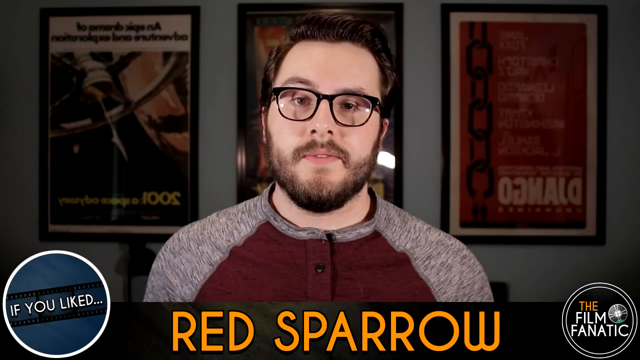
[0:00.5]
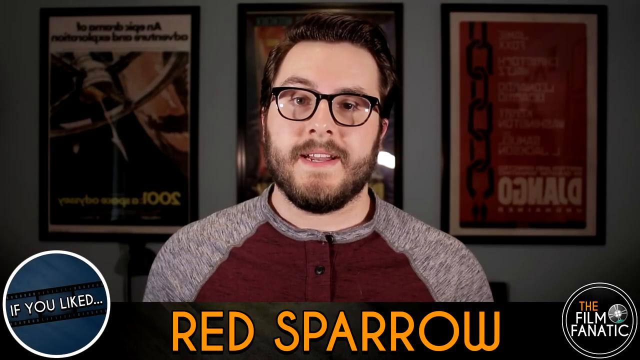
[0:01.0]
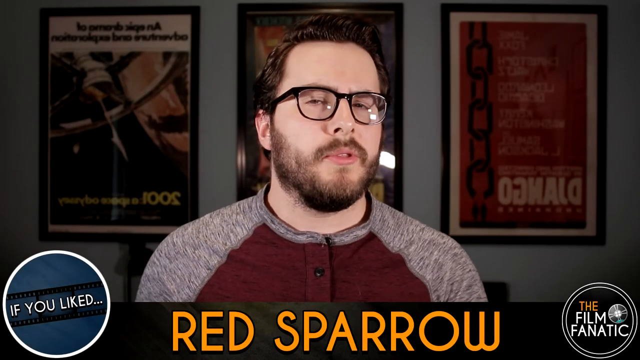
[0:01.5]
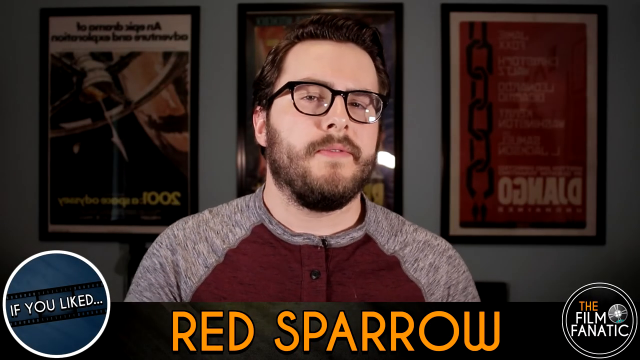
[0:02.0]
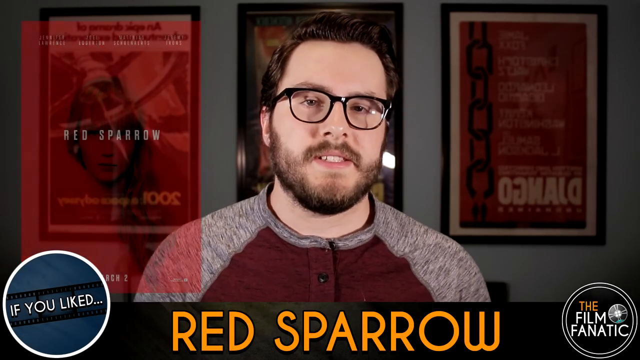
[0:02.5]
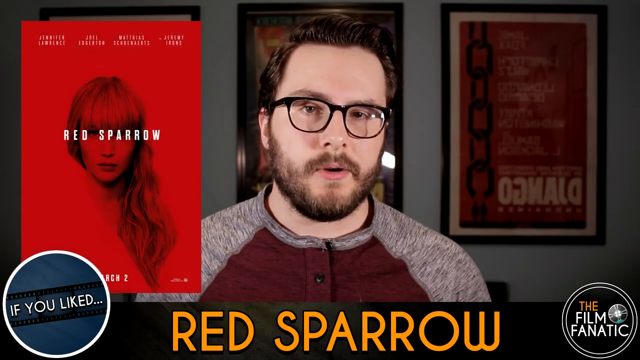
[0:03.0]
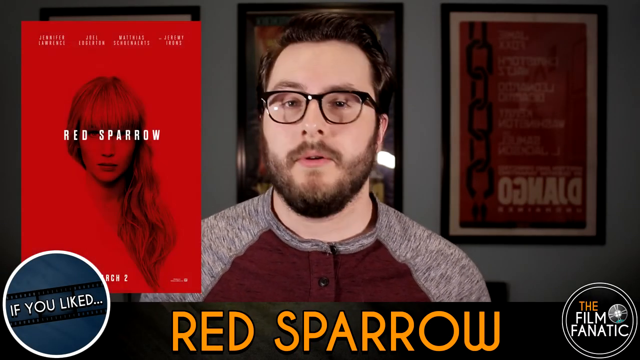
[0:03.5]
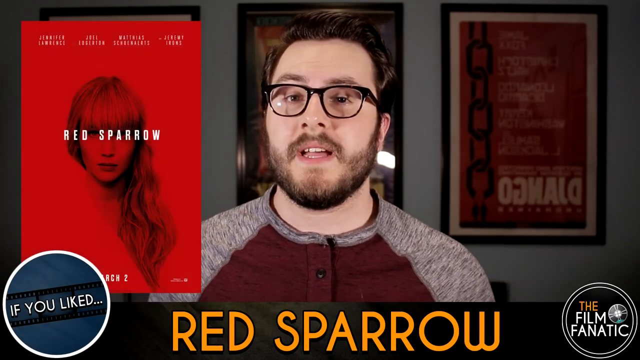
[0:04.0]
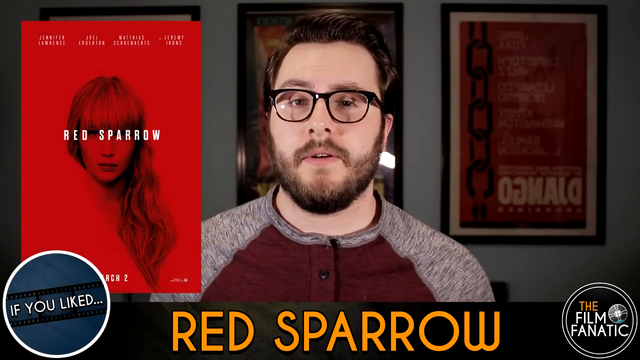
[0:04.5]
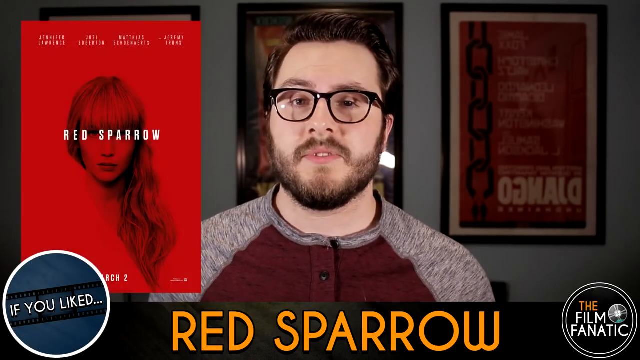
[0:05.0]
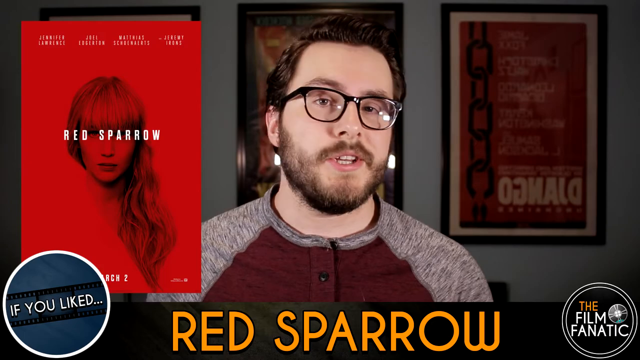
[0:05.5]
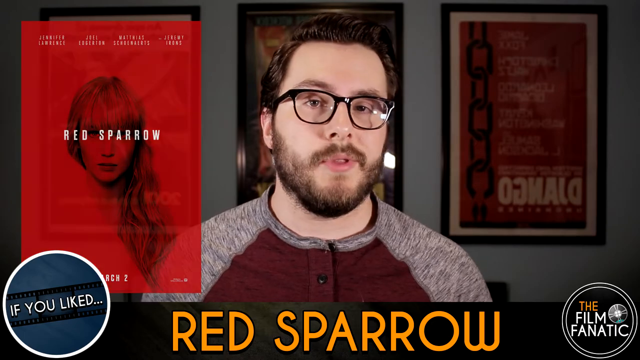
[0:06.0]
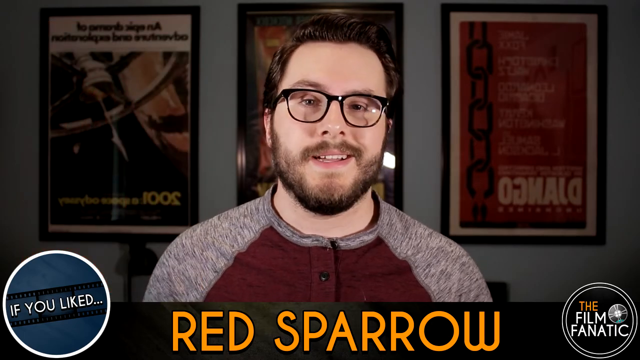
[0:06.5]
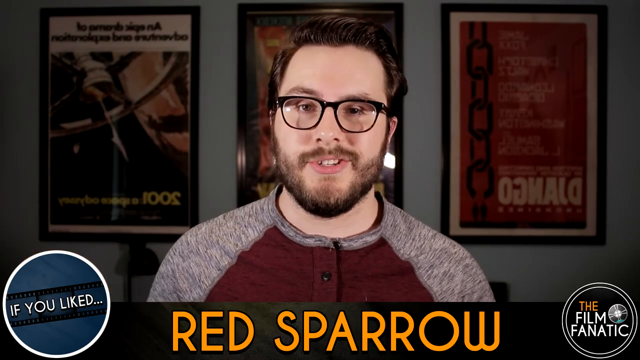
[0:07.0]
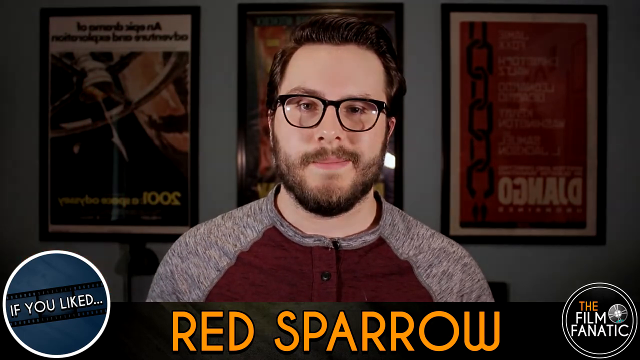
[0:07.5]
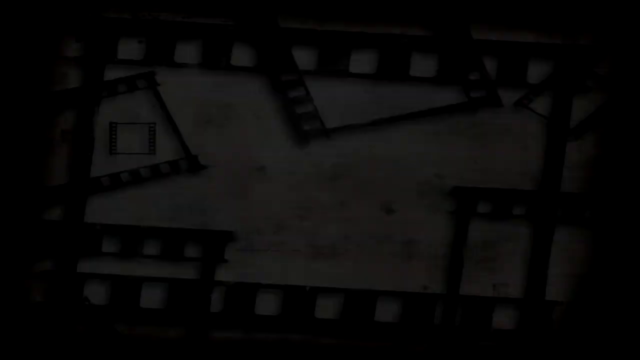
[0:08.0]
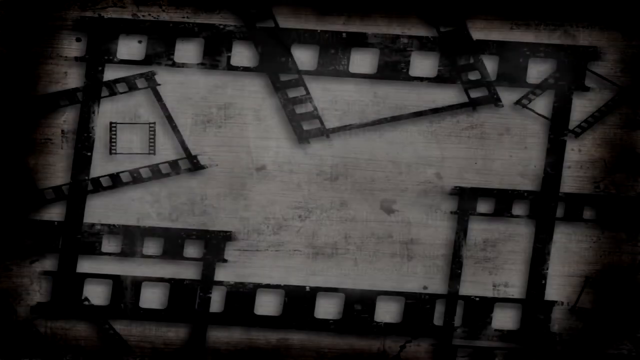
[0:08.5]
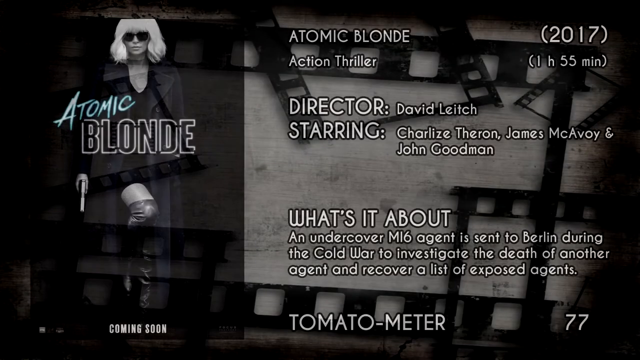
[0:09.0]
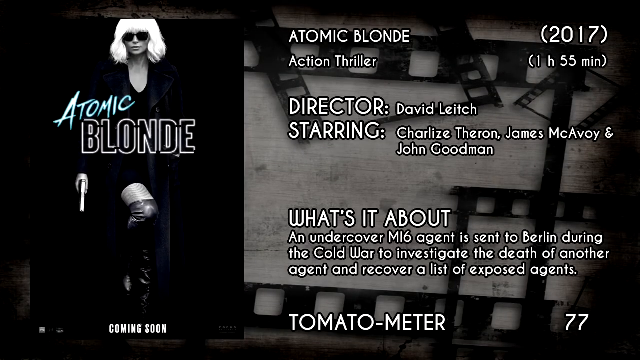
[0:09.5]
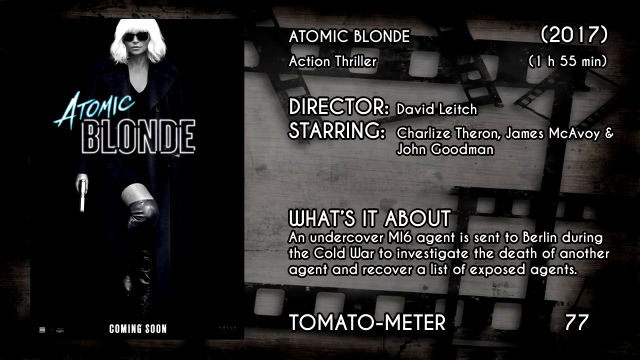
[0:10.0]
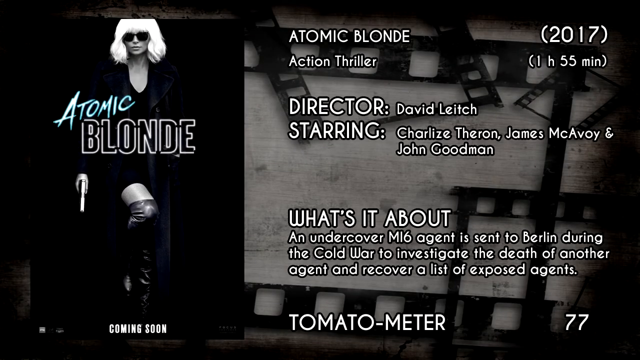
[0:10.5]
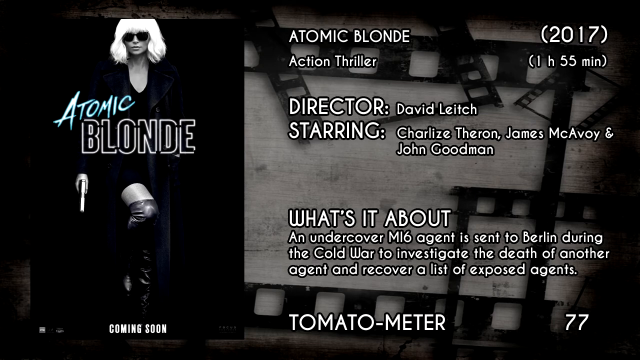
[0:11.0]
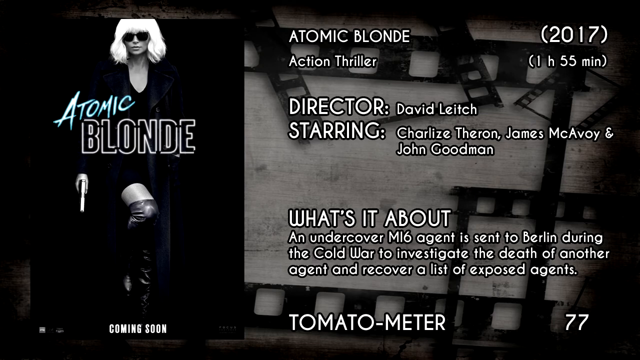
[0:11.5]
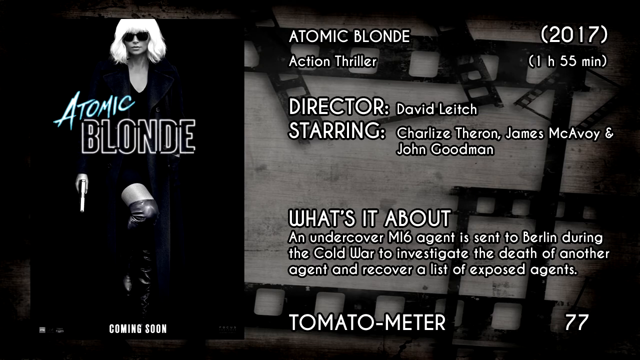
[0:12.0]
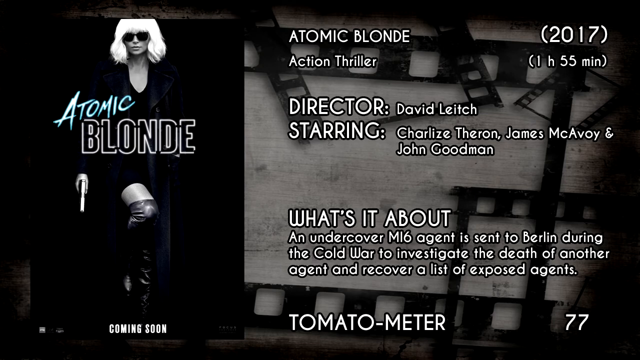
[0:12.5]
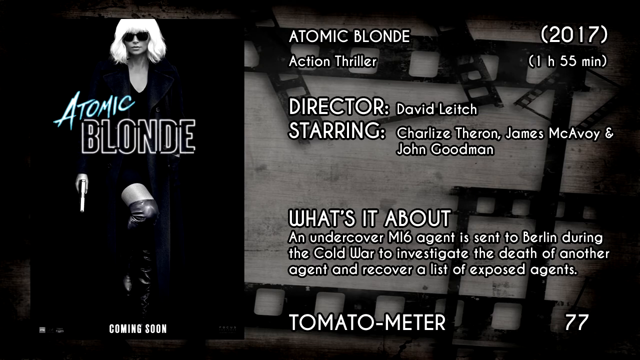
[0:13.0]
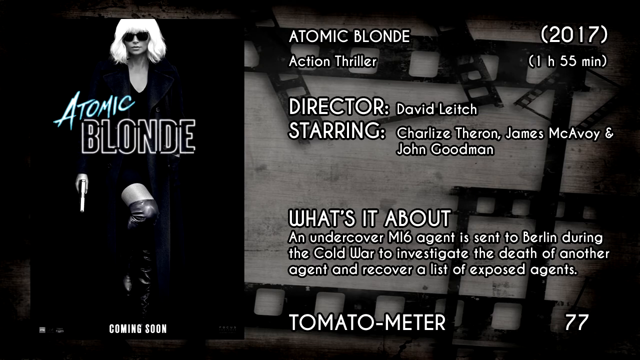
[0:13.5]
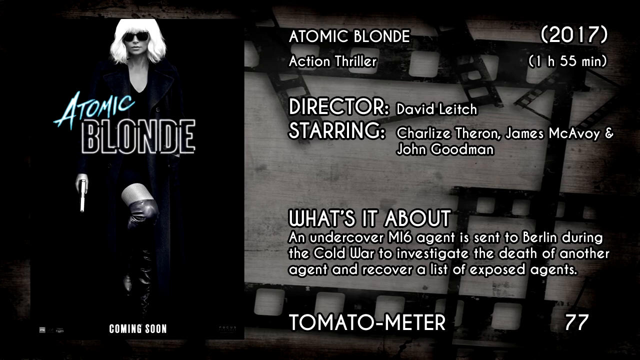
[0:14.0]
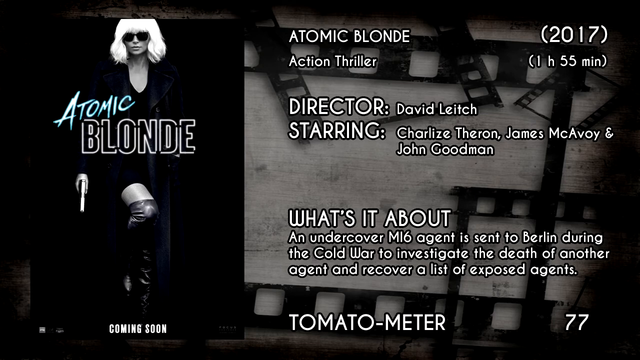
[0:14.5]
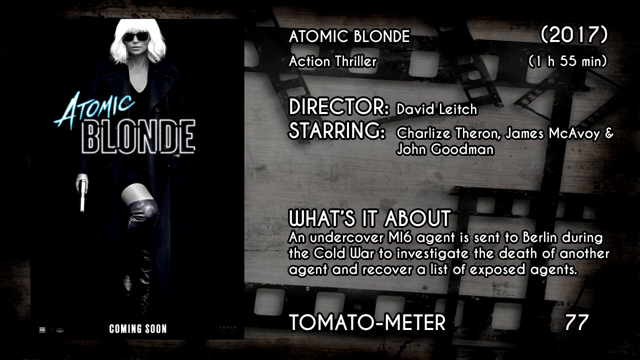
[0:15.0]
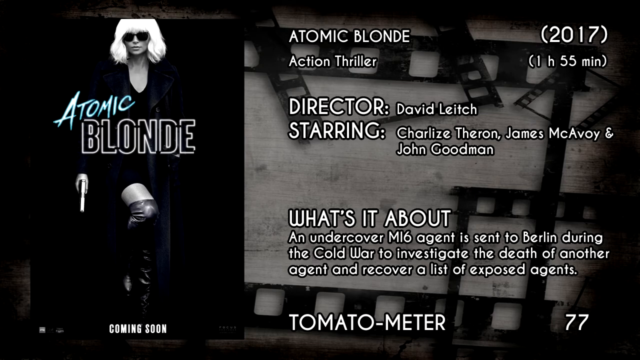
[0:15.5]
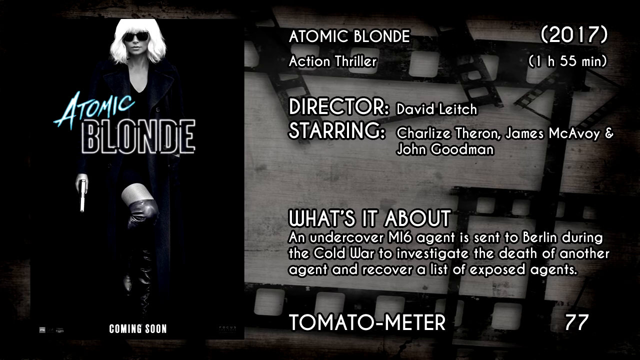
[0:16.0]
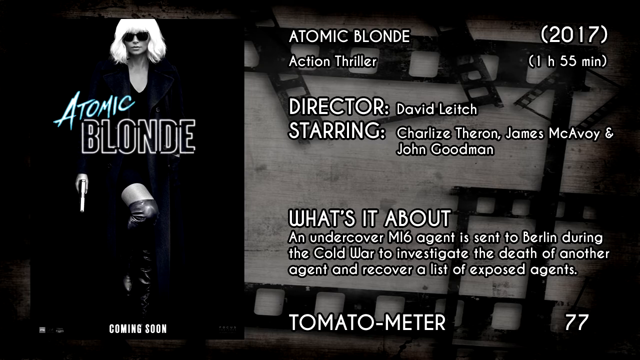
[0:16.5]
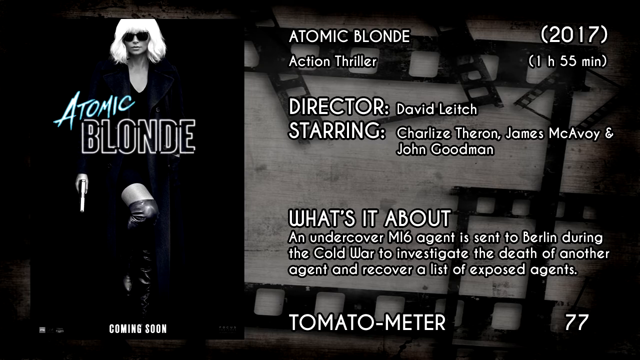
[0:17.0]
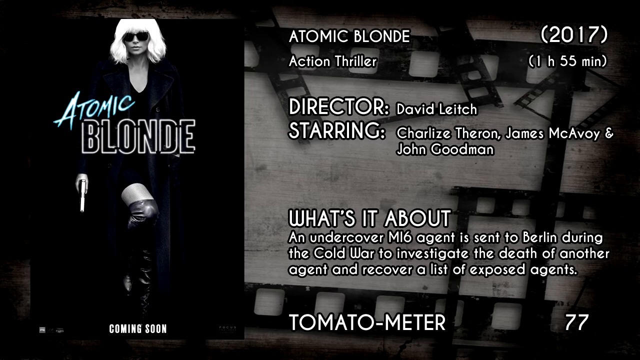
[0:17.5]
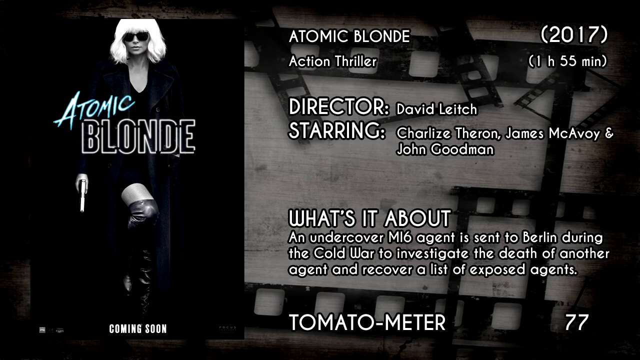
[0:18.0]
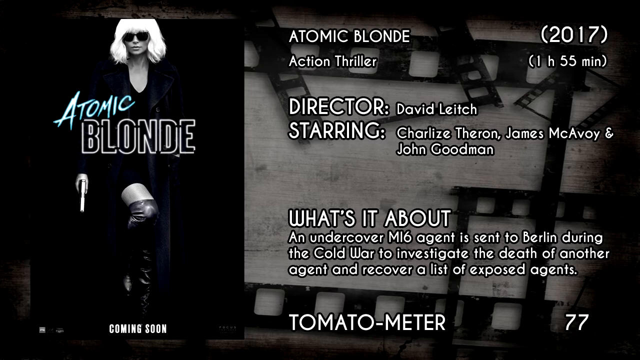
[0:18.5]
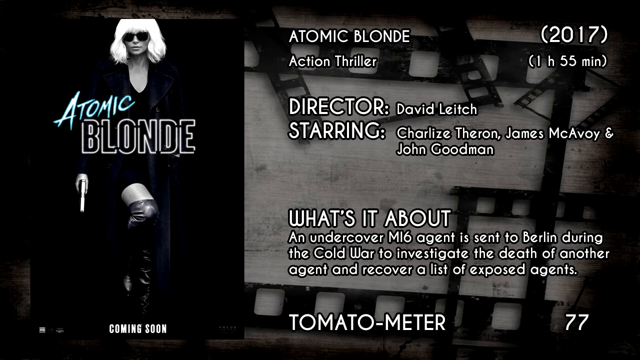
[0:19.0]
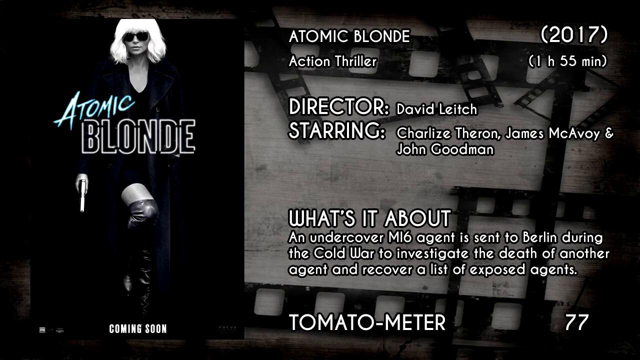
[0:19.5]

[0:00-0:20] A man in a red shirt talks, and Red Sparrow is referenced. Information about Atomic Blonde appears: action thriller, 2017, 1 hour 55 minutes, director David Leitchi, starring Charlize Theron, James McAvoy and John Goodman. Under "What's it about?" it reads "Undercover M-16 agent is sent to Berlin during the Cold War to investigate the death of another agent and recover a list of exposed agents." A Tomato Meter rating is also listed. The movie poster is on the left, showing a blonde woman with sunglasses, dressed in all black with thigh-high boots and a pistol in her hand.